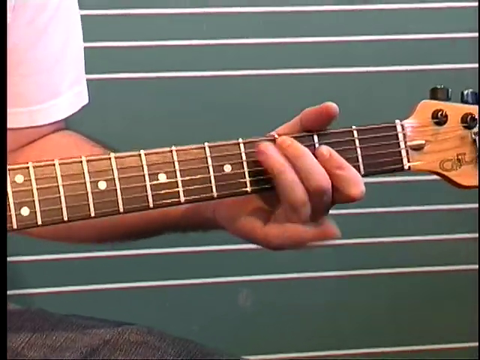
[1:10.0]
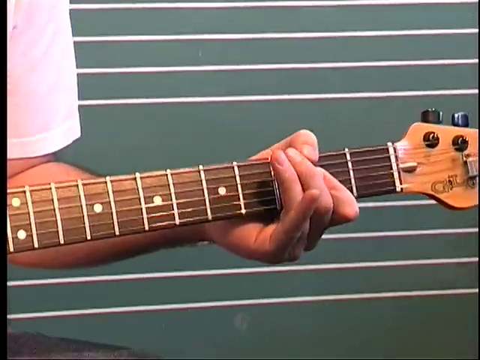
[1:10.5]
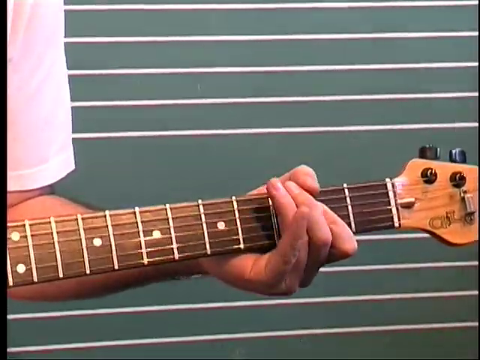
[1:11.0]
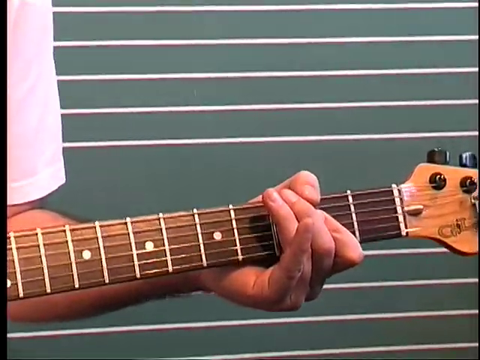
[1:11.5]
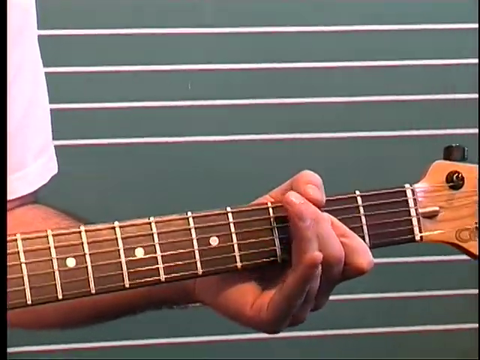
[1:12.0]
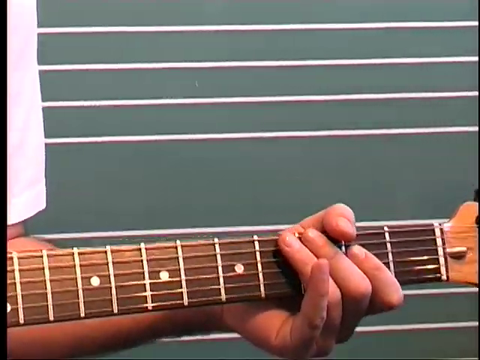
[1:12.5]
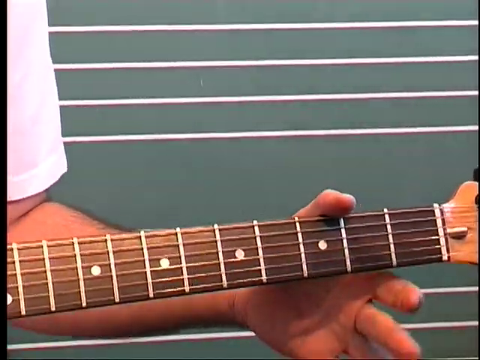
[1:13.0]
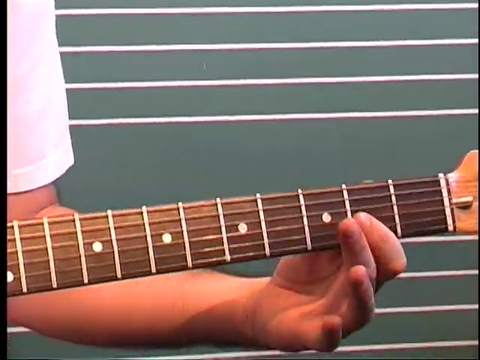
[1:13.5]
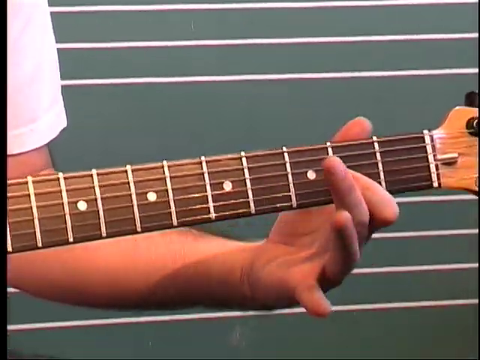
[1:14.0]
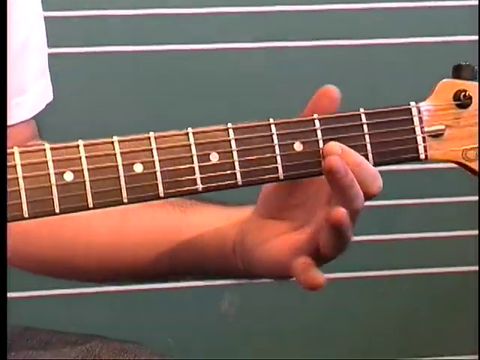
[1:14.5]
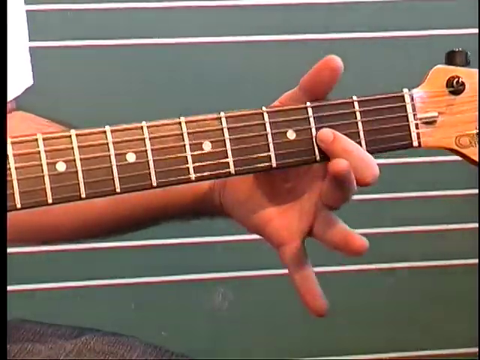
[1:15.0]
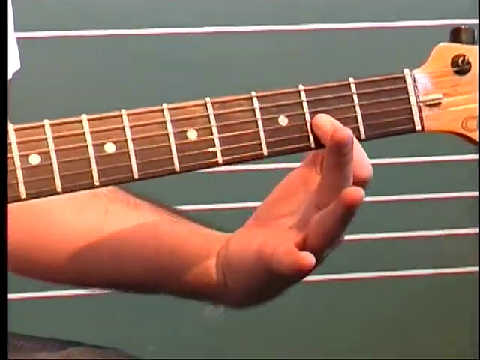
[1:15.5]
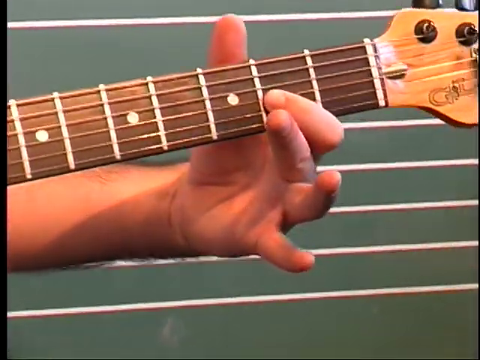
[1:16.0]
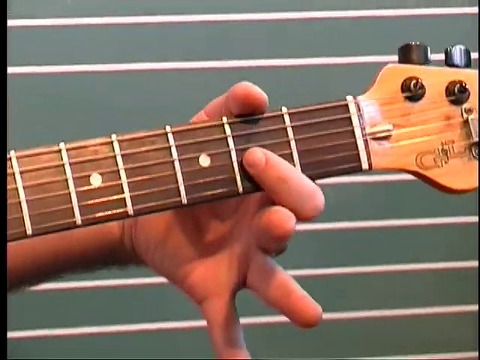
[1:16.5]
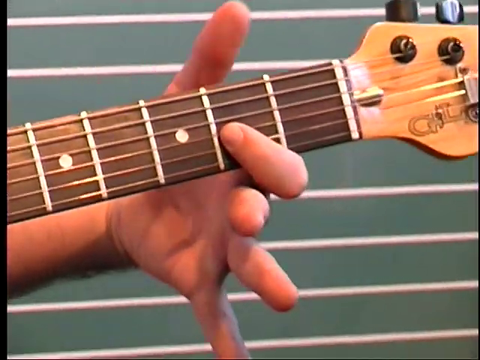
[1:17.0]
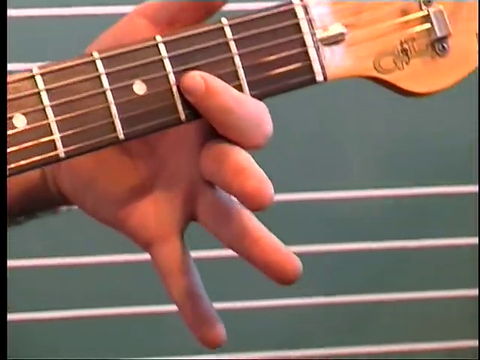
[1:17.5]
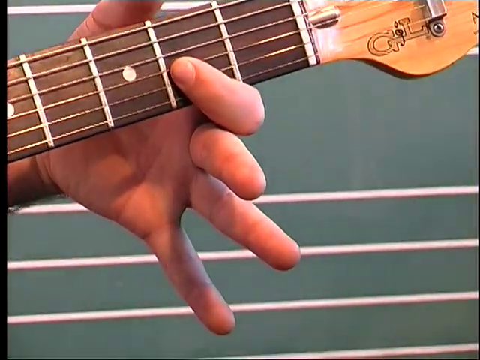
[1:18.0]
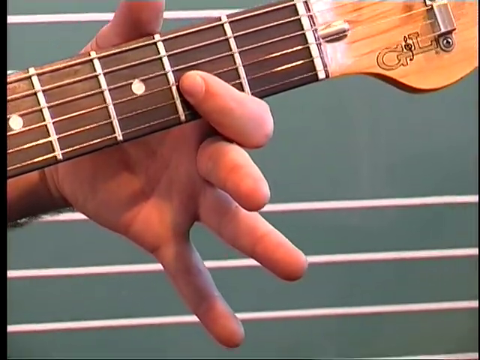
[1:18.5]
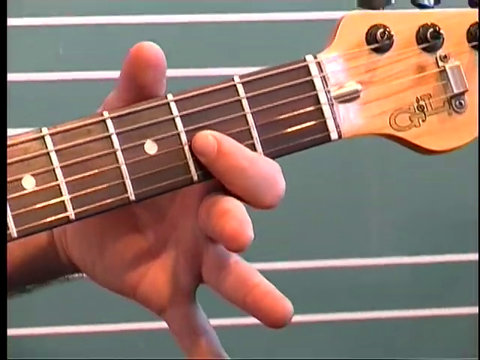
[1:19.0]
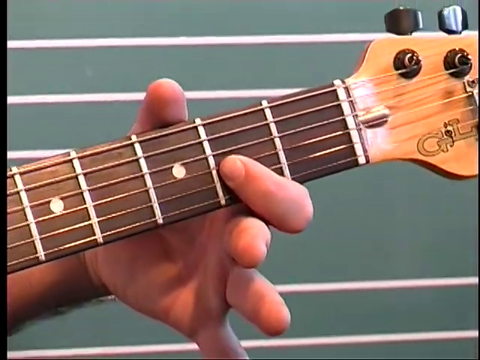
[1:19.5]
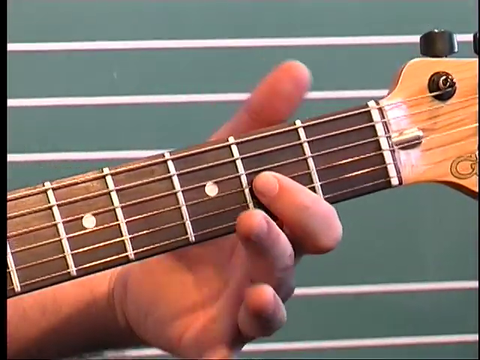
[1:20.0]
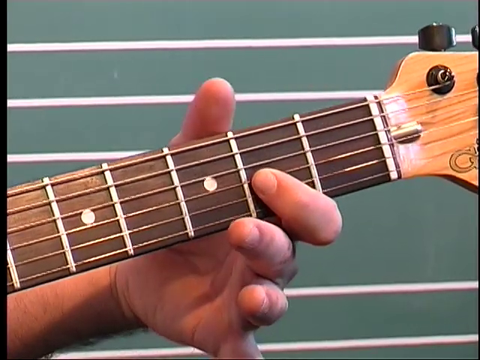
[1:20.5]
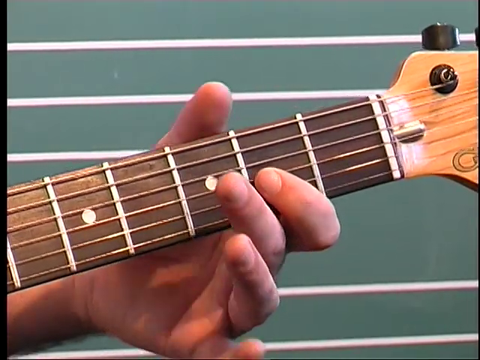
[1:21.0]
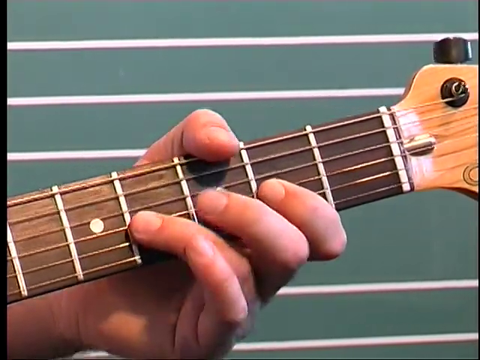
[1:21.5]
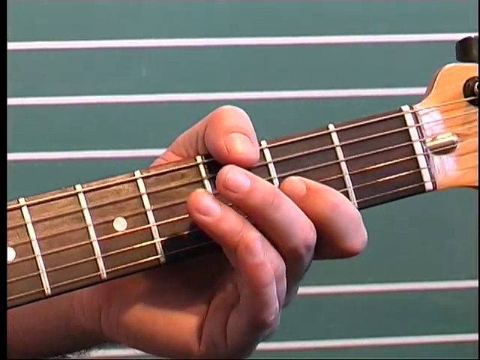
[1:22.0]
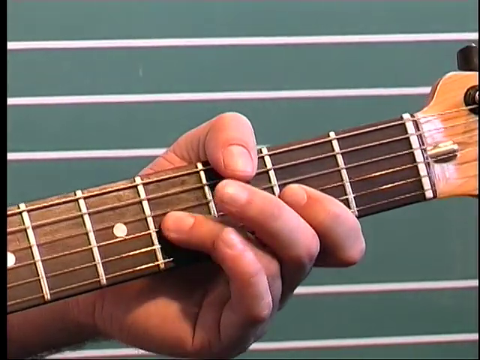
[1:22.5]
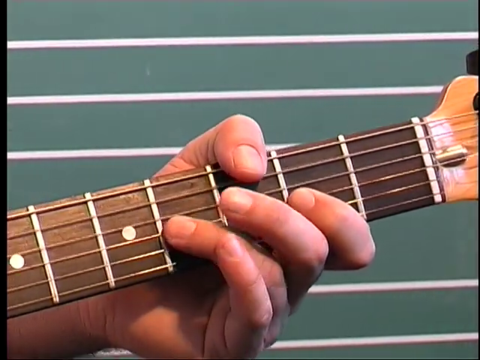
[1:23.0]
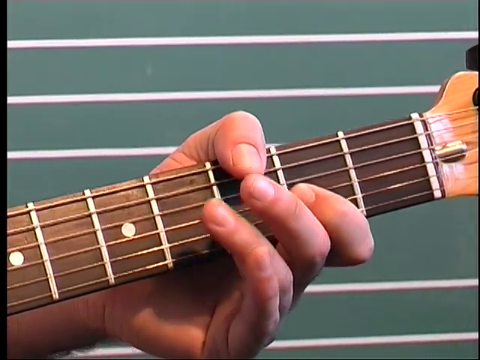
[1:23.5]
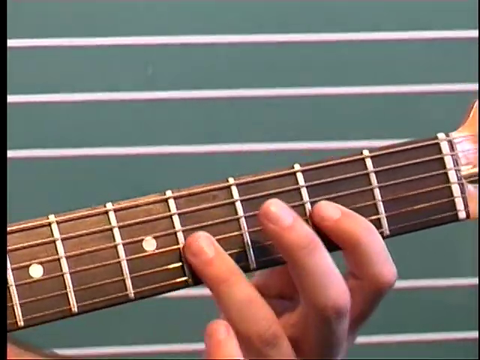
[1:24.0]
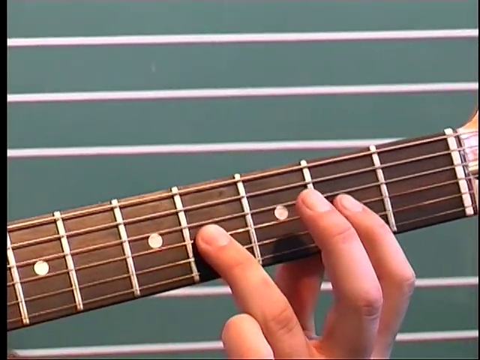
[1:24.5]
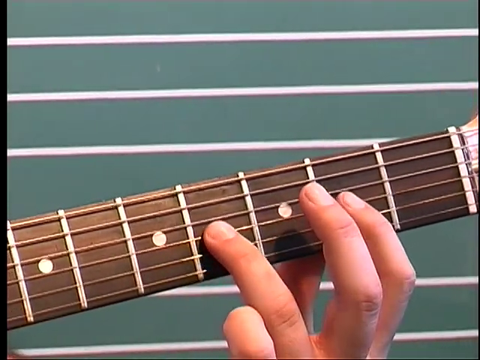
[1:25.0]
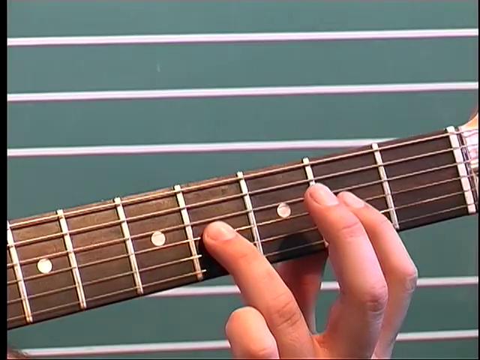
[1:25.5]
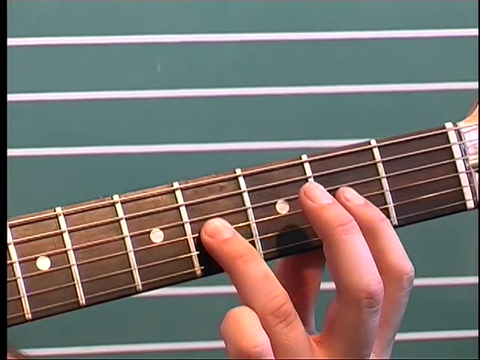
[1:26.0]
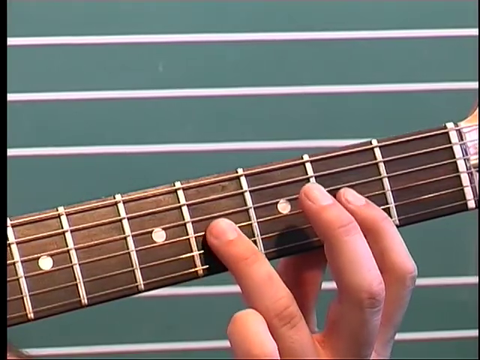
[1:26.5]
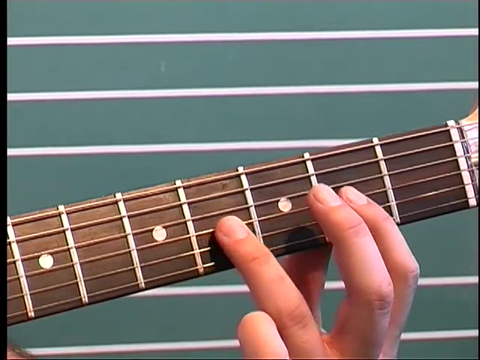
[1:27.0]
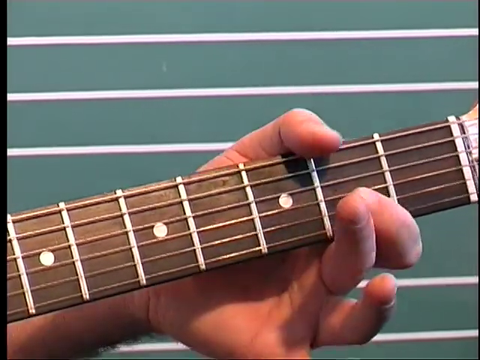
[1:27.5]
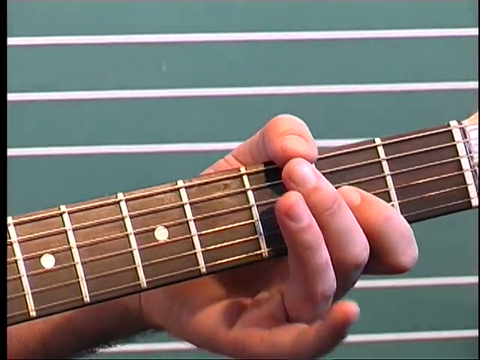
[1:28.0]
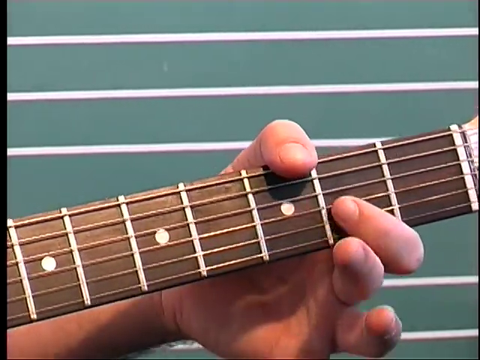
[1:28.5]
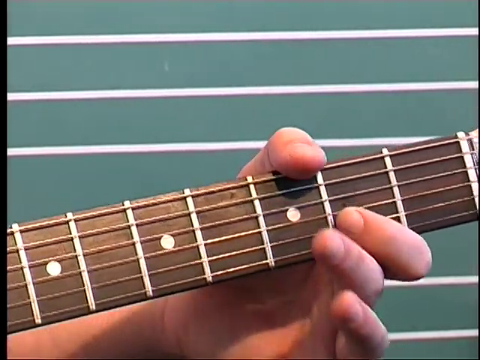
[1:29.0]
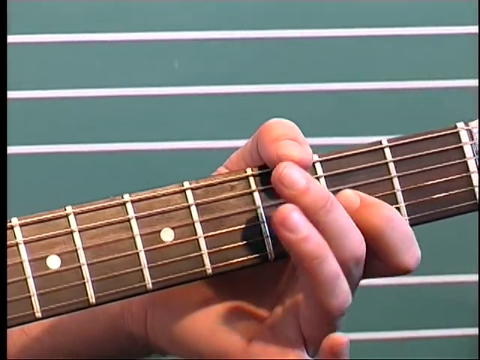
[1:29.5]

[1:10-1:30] A close-up shows a man's left hand on the neck of a guitar as he plays, pressing different strings. He lifts his hand somewhat and shows his index finger pressing the third string from the bottom, almost at the very end of the guitar, and the camera zooms in closer. His thumb presses down the top string while the rest of his fingers tap on the third string from the bottom, a little lower on the neck, demonstrating which notes to press. A little of his short white sleeve is visible, and behind him is a green chalkboard with groups of five white lines like those in sheet music.